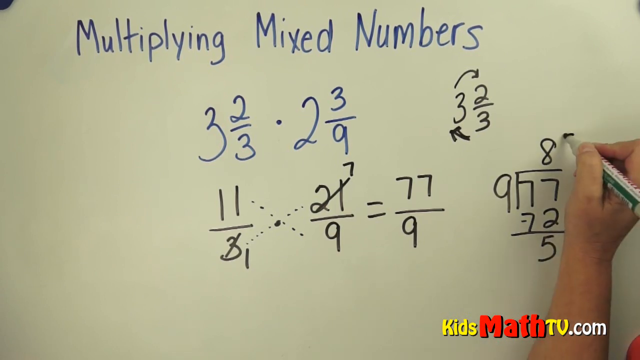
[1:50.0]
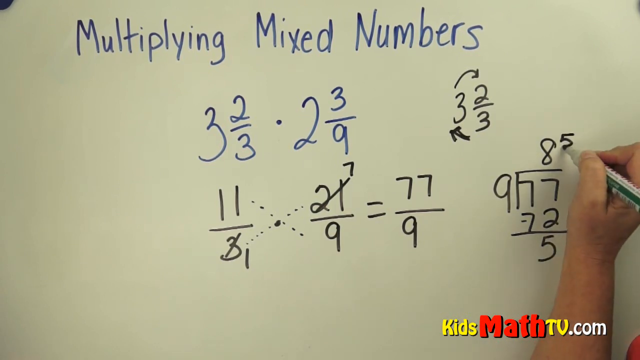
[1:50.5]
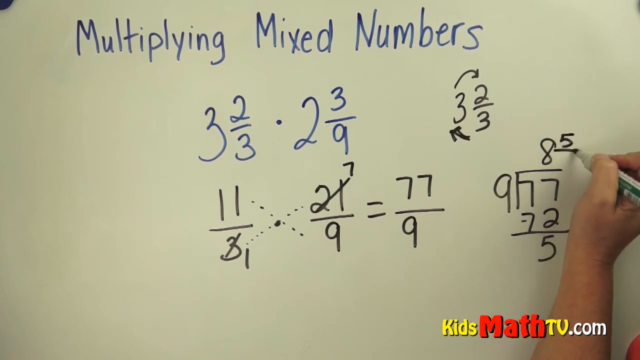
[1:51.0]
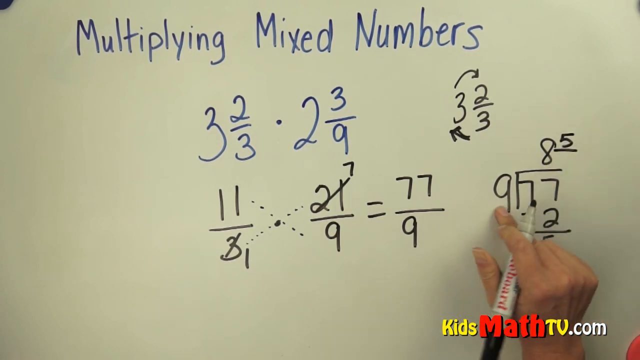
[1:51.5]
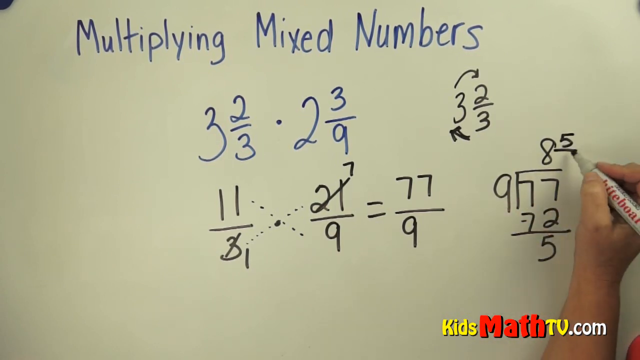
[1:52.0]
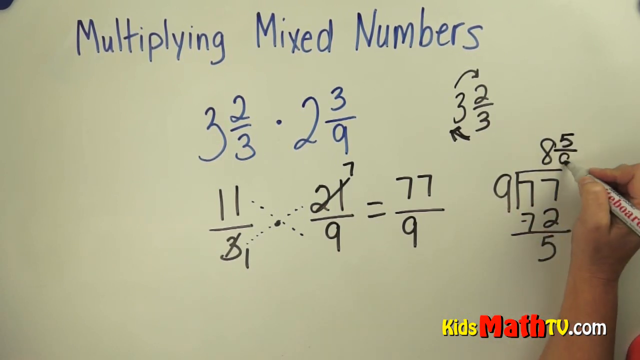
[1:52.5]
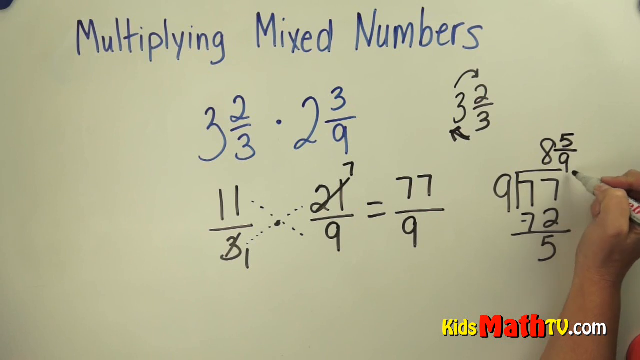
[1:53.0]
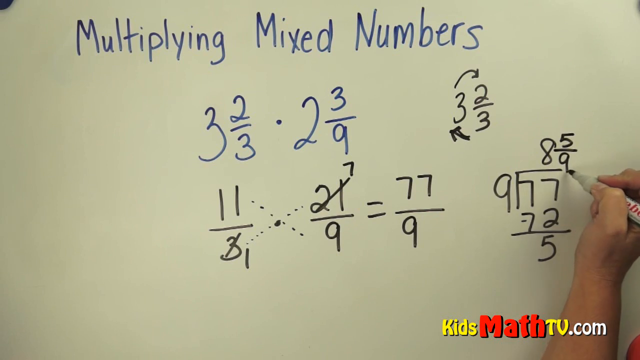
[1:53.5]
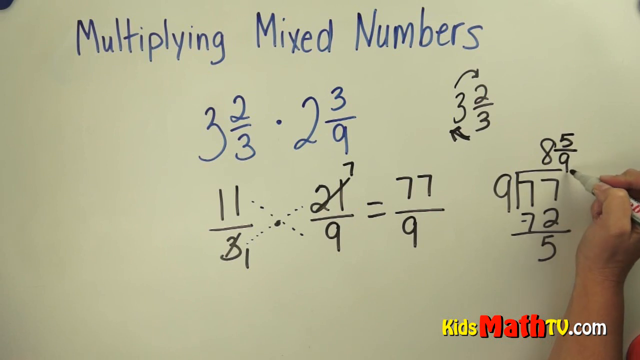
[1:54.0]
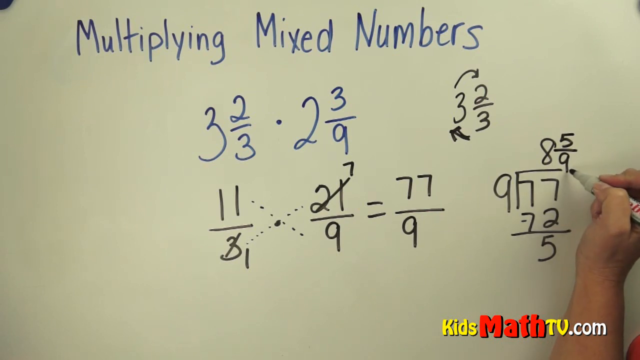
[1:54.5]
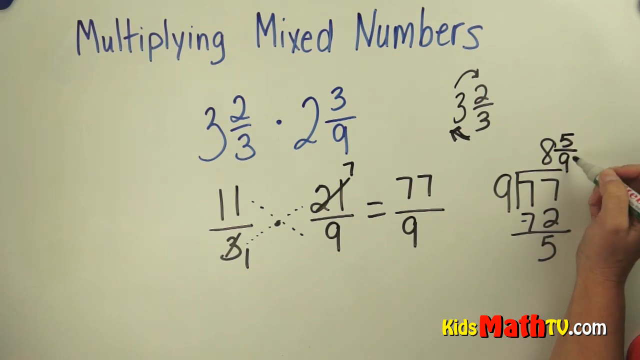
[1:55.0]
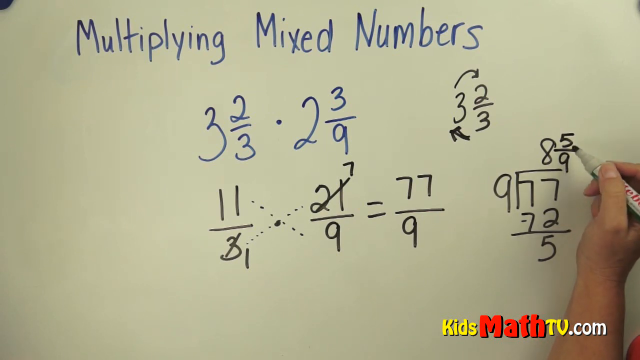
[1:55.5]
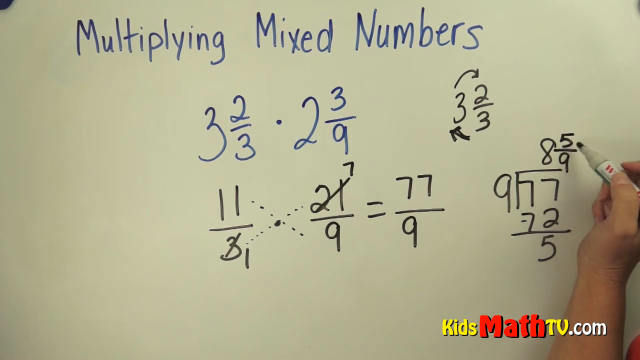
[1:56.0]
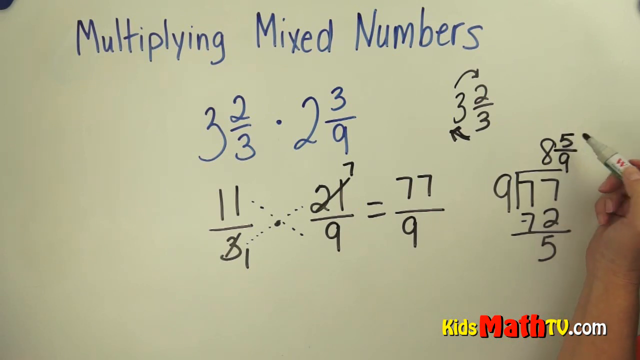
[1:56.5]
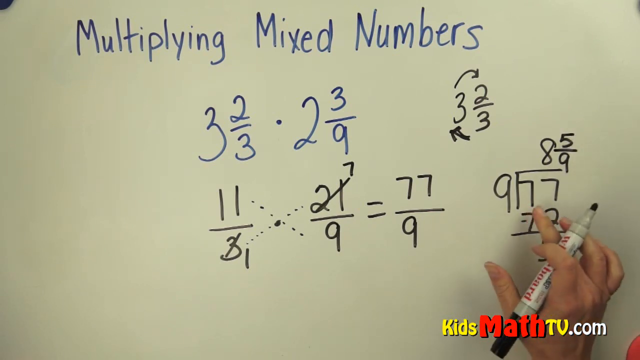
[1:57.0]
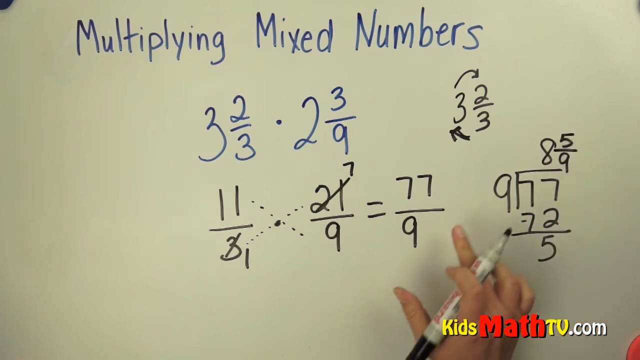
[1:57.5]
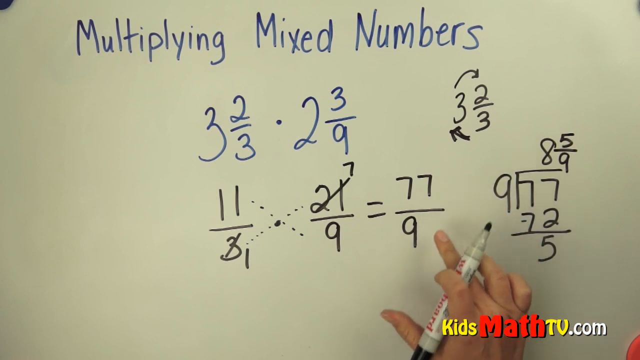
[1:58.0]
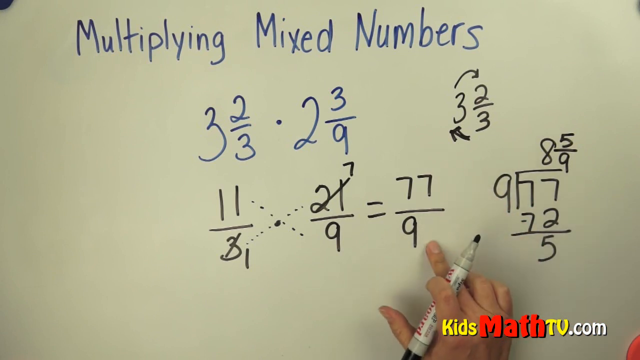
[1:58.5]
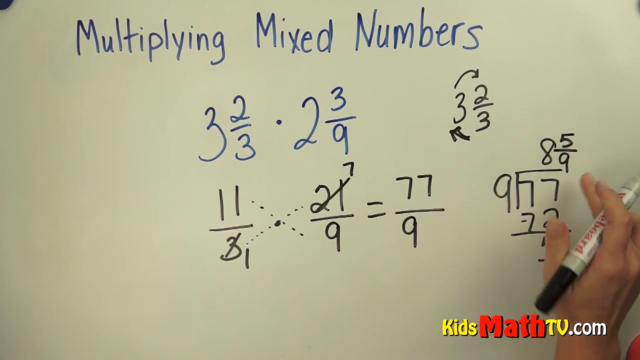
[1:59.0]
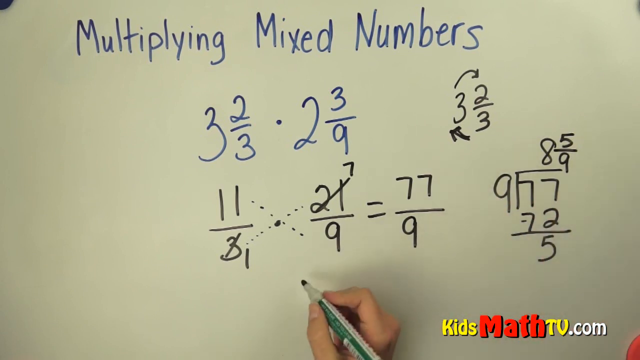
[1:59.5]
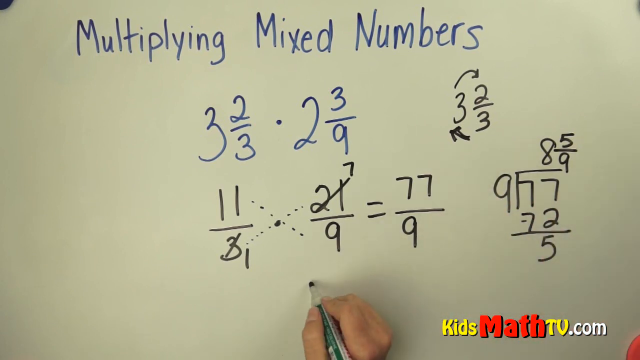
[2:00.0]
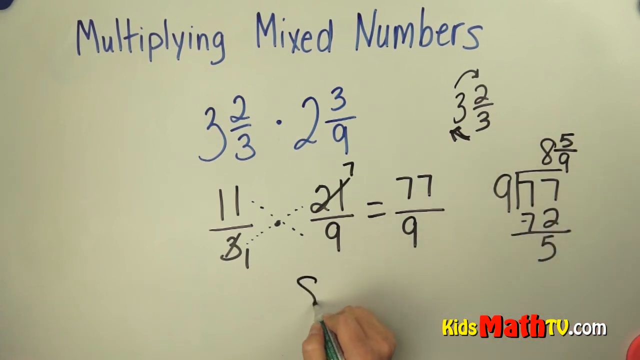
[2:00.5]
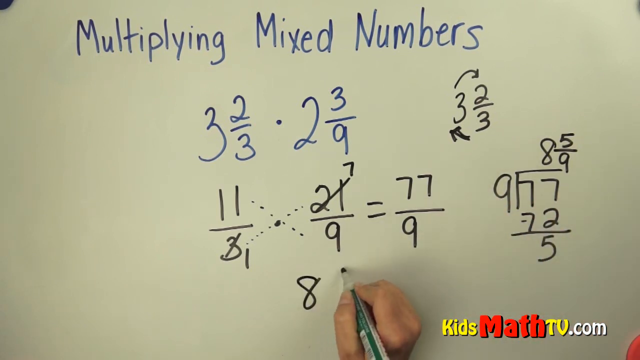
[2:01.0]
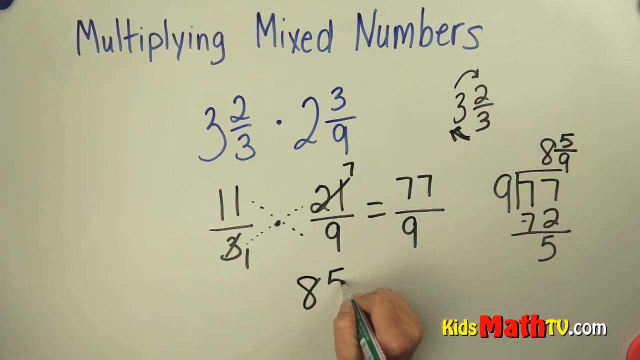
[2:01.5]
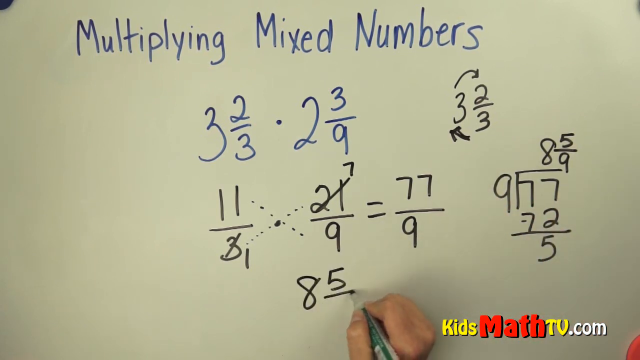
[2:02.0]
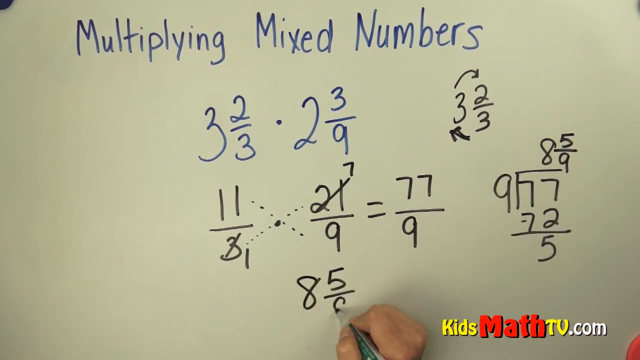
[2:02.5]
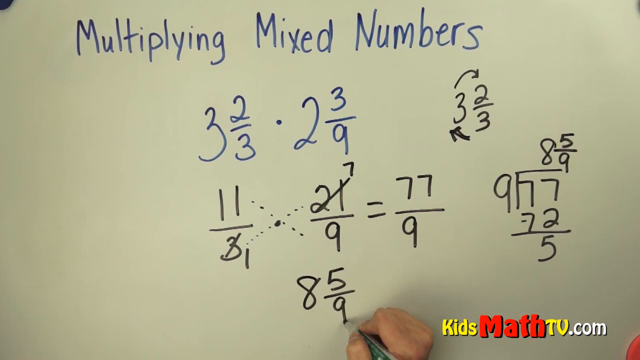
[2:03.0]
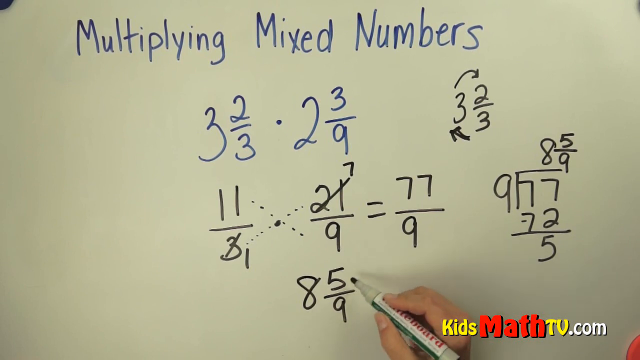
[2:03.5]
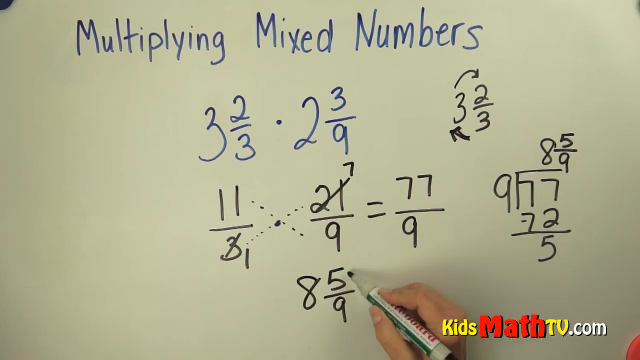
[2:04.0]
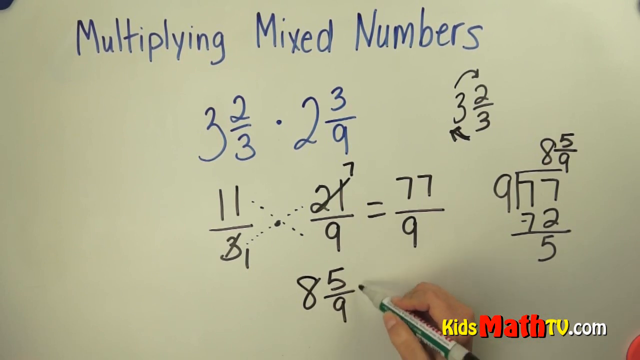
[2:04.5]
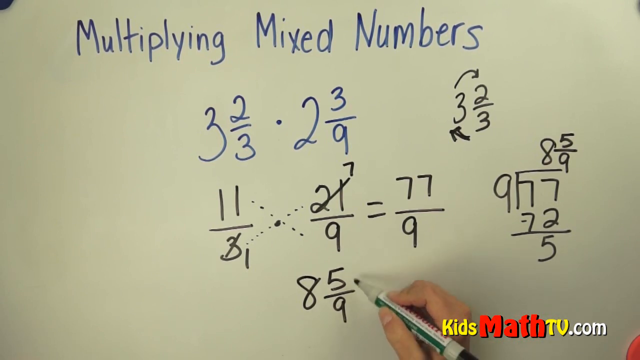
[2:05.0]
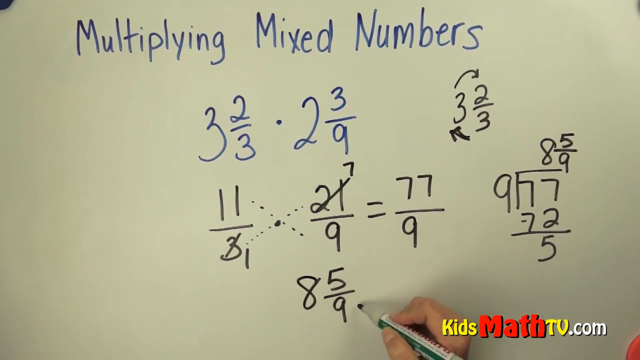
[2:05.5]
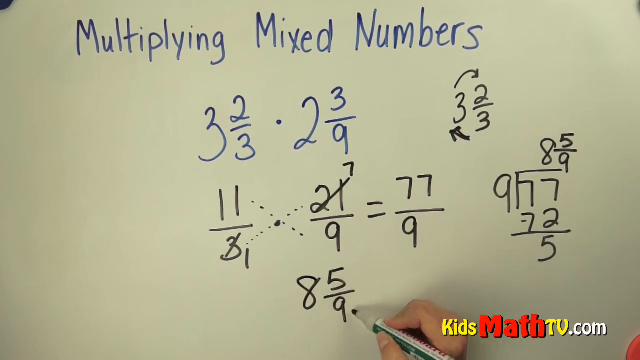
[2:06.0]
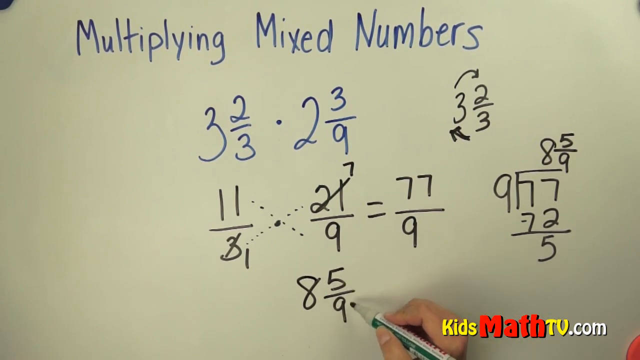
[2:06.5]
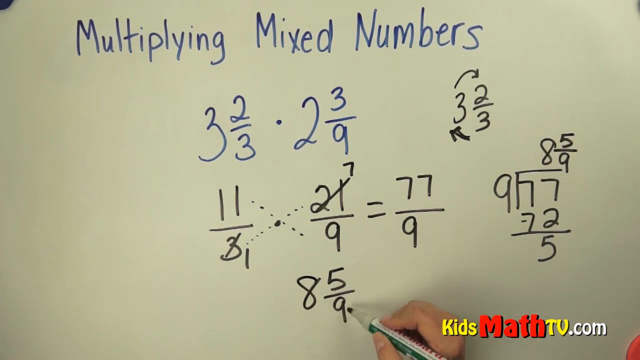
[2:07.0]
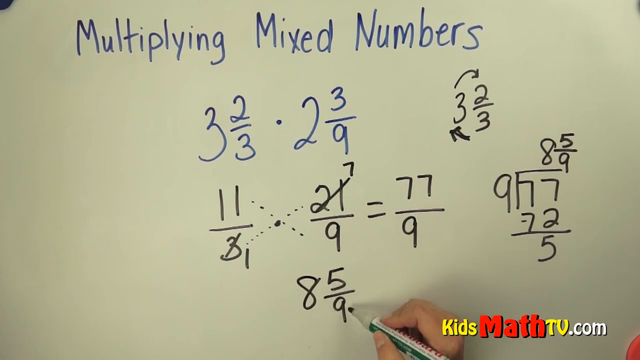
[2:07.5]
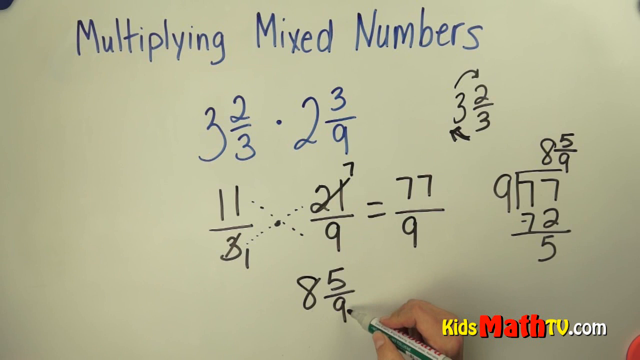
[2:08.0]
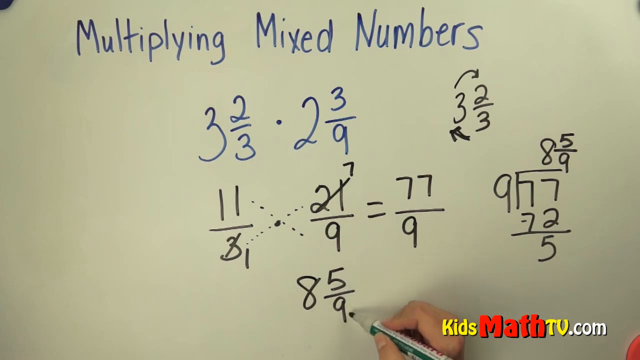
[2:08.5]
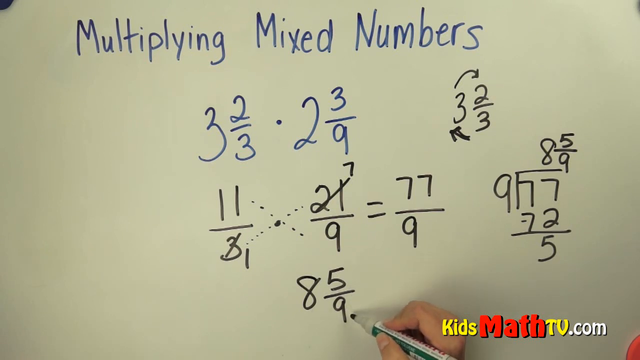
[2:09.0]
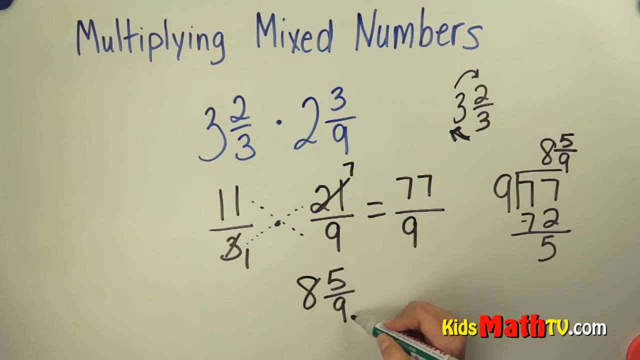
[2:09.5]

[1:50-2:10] The whiteboard shows the blue heading "Multiply Mixed Numbers", with 3 and 2 thirds and 2 and 3 ninths beneath it. Below, written in black, the numbers are simplified to 11 over 1 and 7 over 9, and their multiplication gives 77 over 9, also written in black. The right hand, holding a marker pen between the thumb and index finger, works out the division of 77 by 9, giving 8 and 5 ninths, and writes this at the bottom of the whiteboard. It then moves the marker back and forth between the 5 and the 9, indicating an explanation.